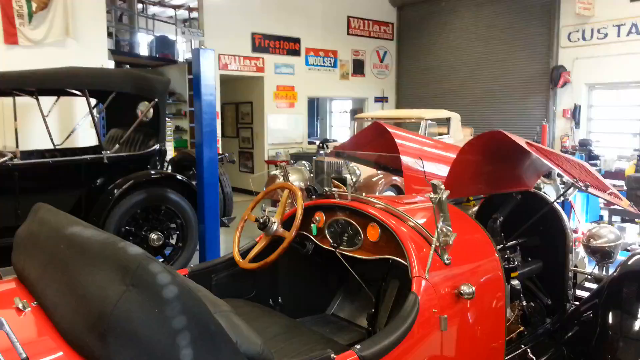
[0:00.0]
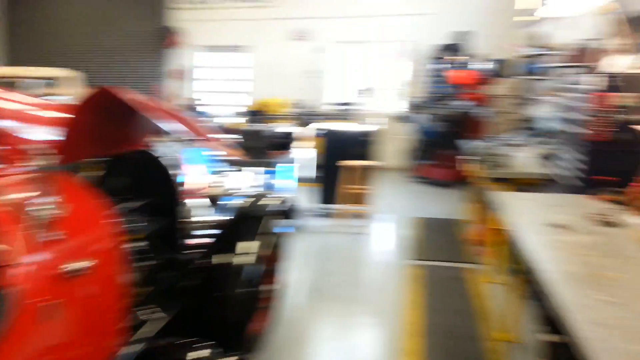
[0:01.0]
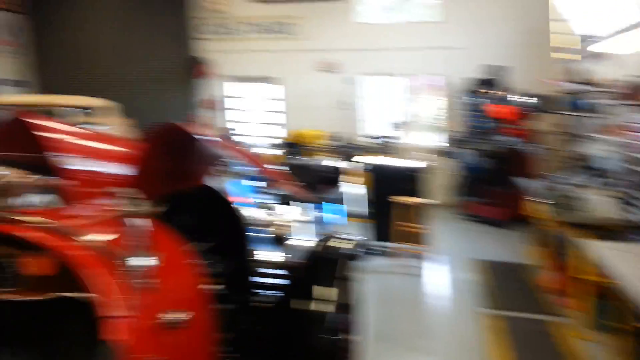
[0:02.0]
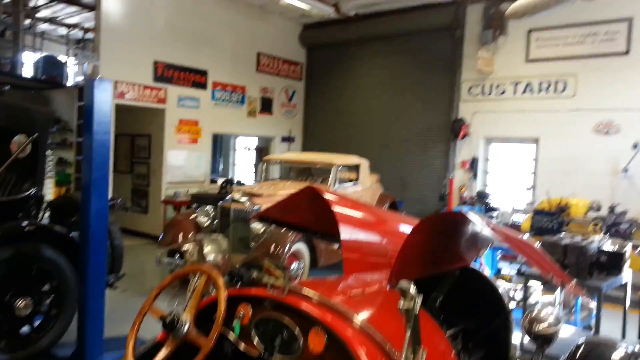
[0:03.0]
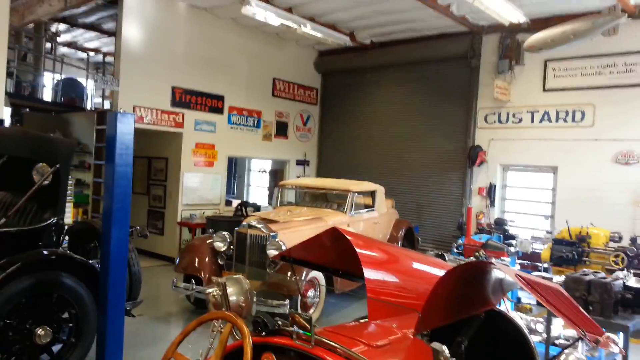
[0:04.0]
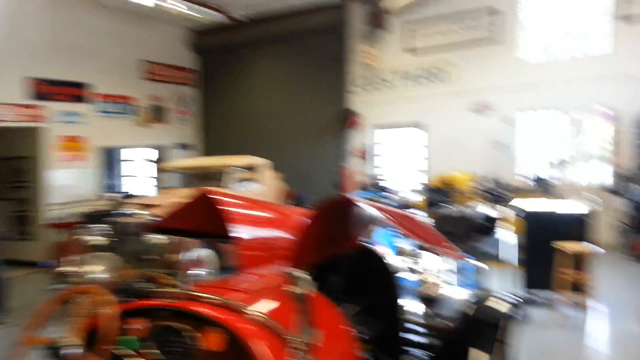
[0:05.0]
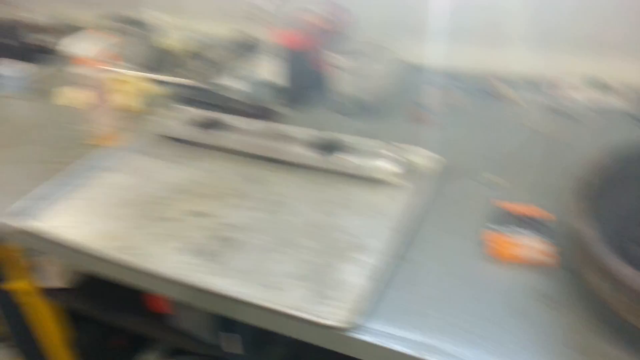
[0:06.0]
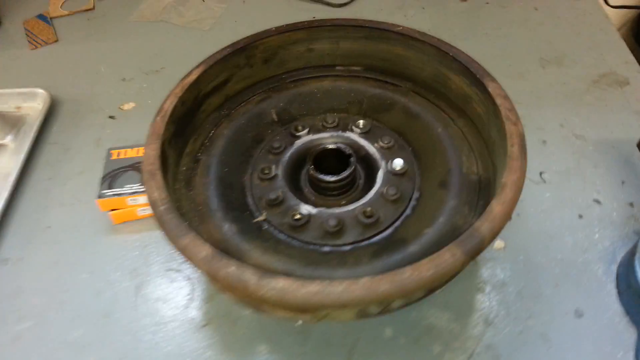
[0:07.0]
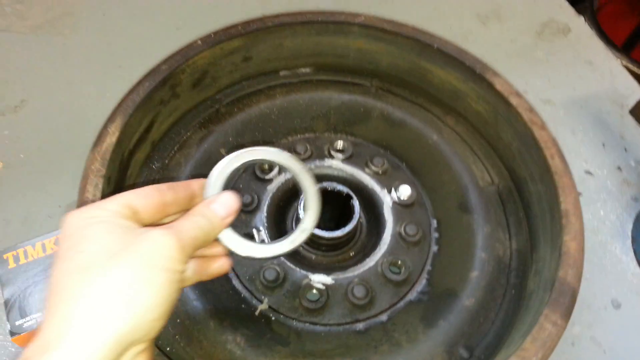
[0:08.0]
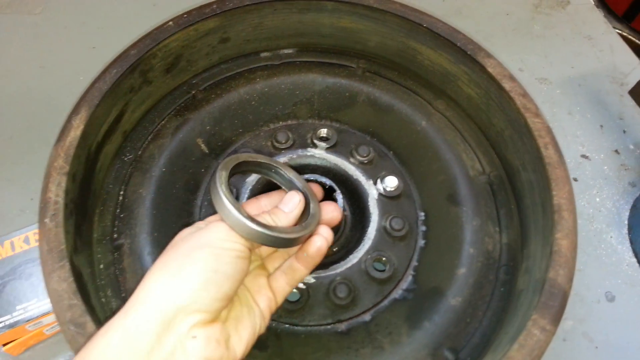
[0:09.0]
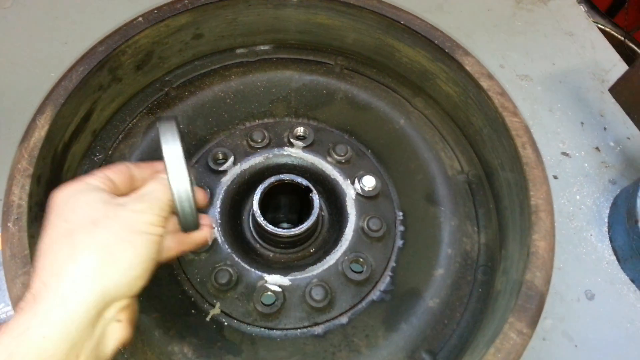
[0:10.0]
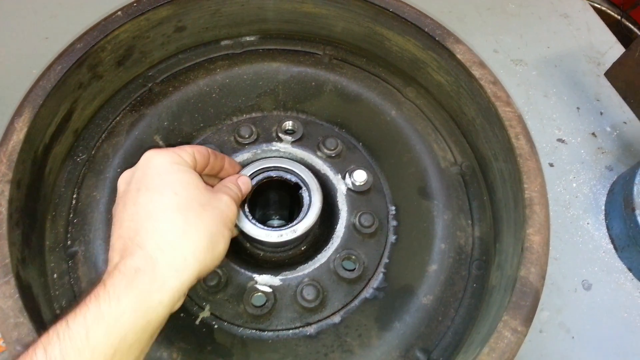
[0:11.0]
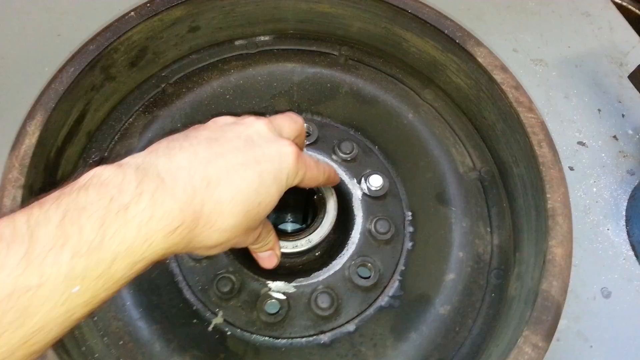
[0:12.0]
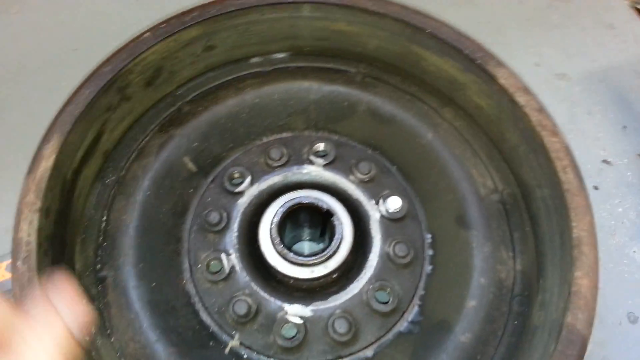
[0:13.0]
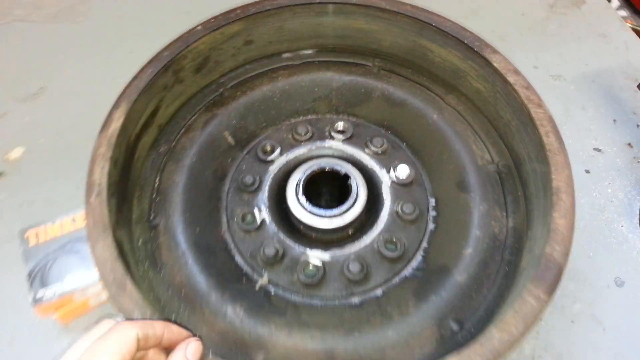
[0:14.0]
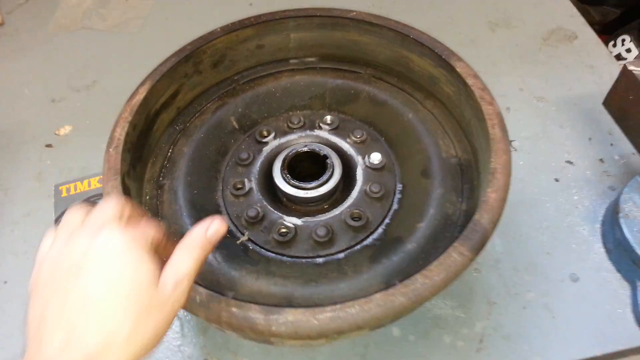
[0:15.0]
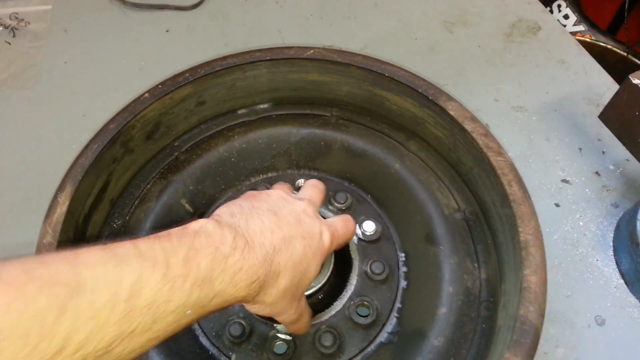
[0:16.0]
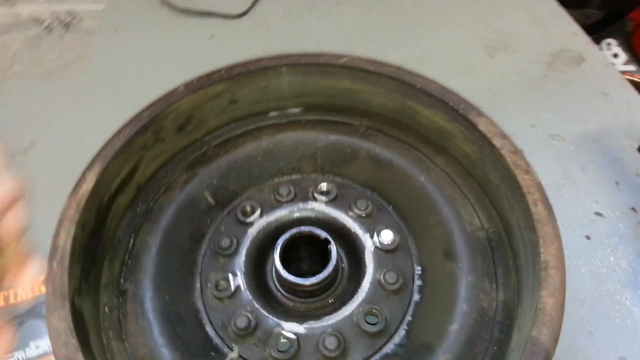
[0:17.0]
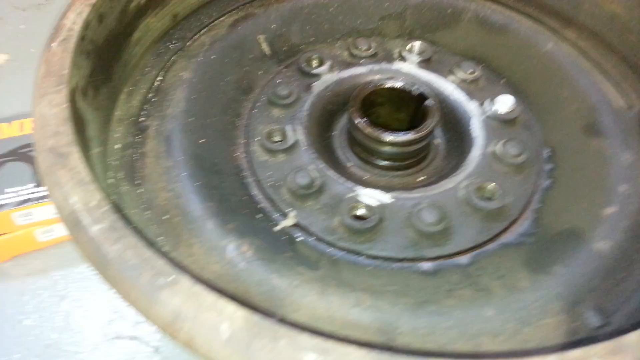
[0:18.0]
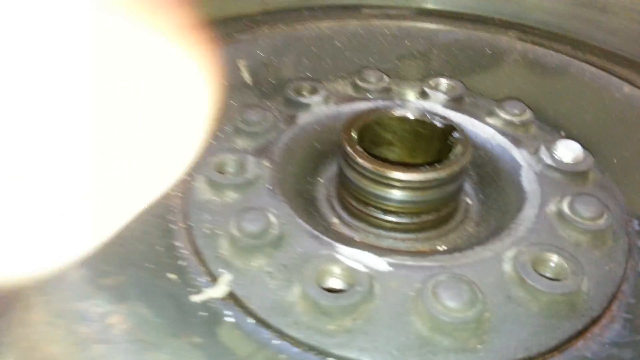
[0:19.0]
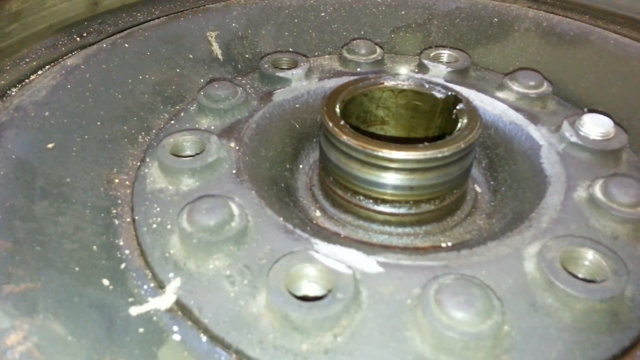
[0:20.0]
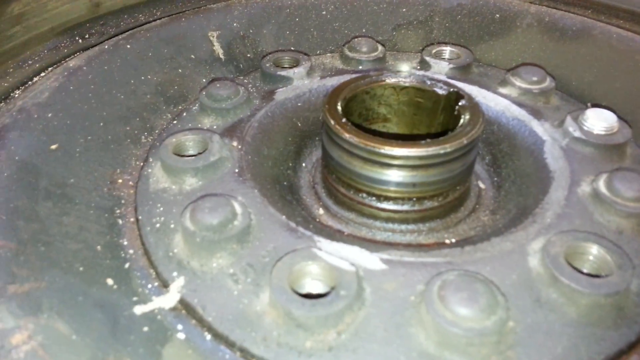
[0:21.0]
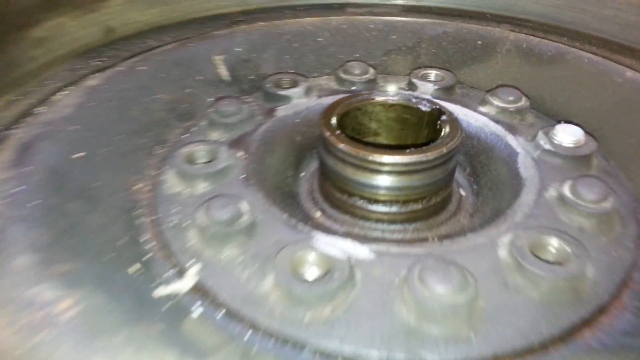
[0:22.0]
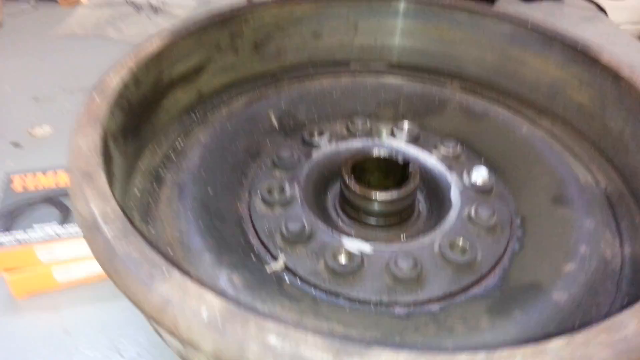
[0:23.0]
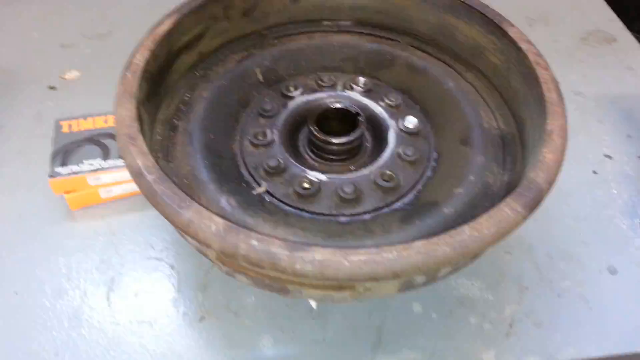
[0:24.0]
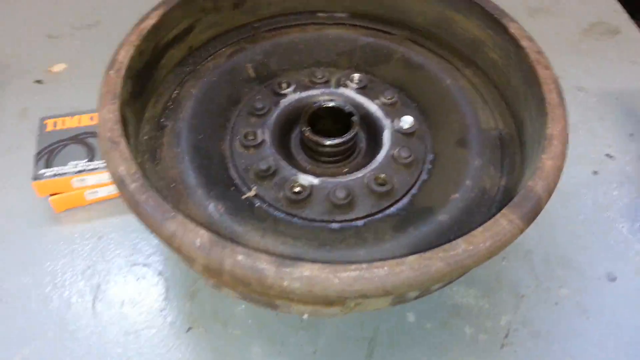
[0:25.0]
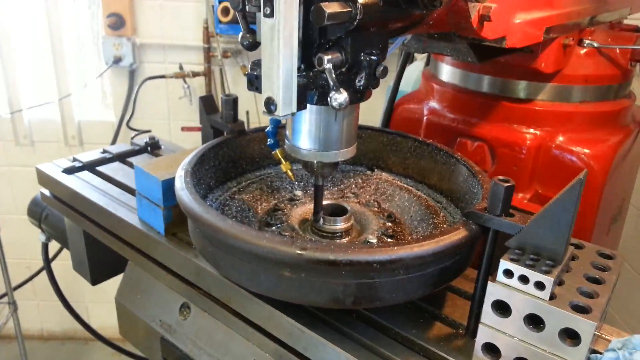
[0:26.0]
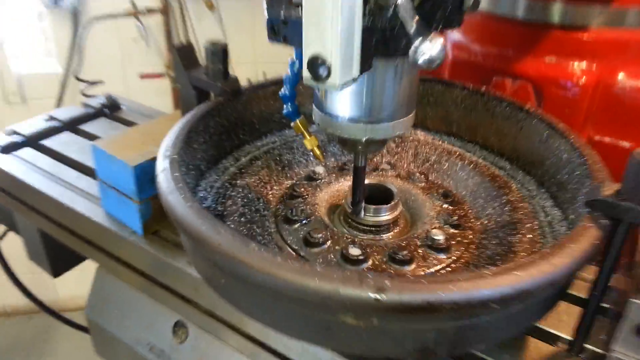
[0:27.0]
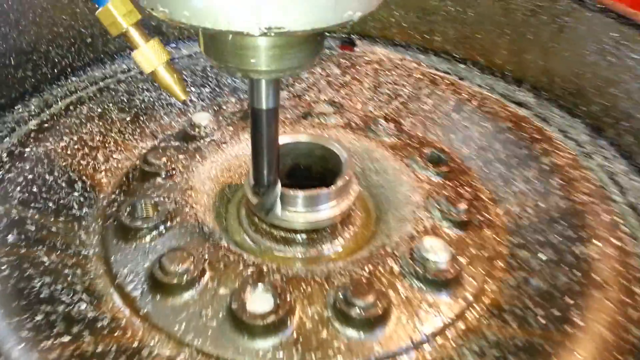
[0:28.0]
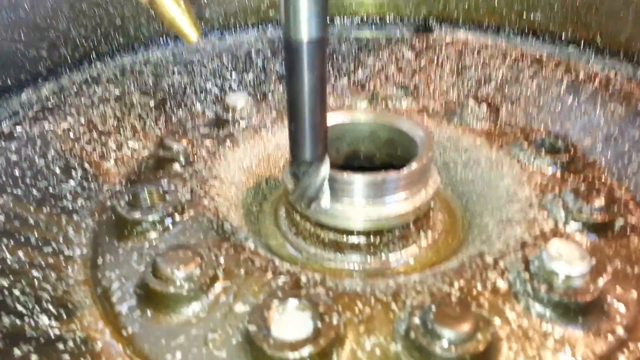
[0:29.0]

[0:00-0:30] Inside a garage are some very old classic cars. One red car looks like it is from the 1910s or 1920s, with a hood that opens up on the left and right sides. It is seen from the back, with a wooden steering wheel in front of the cloth seat. The camera pans to the right, pans back to the left, and pans further left to show another car before panning back to the right. Next comes what looks like part of the tire, some kind of drum or rim, with a metal bearing on top of it. A person's hand comes in holding the round bearing and pushes it down onto the hub. The camera zooms back out a little, and the hand comes back in and pulls the bearing off. The camera zooms in on the hub, showing the rings inside where the bearing will attach. Then a drill appears with the hub underneath it, and a finger comes in and points at it.